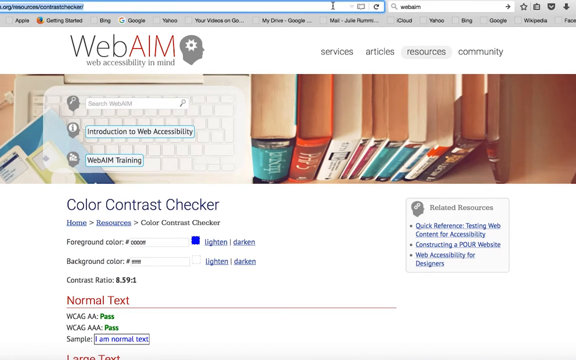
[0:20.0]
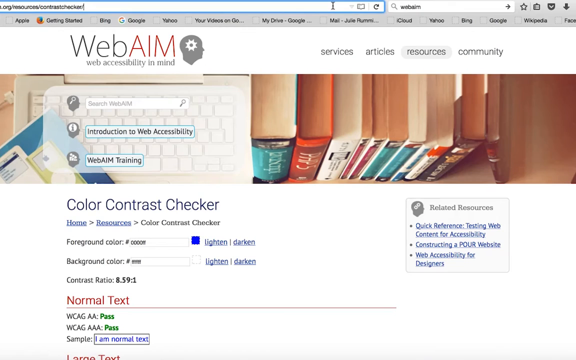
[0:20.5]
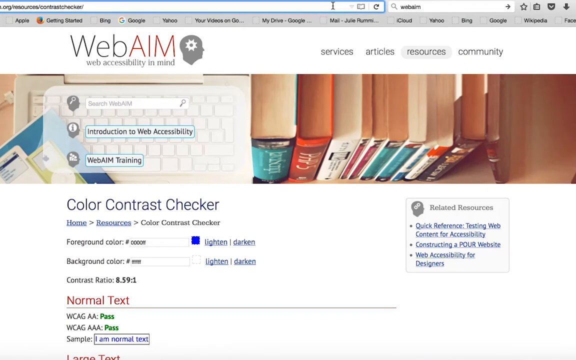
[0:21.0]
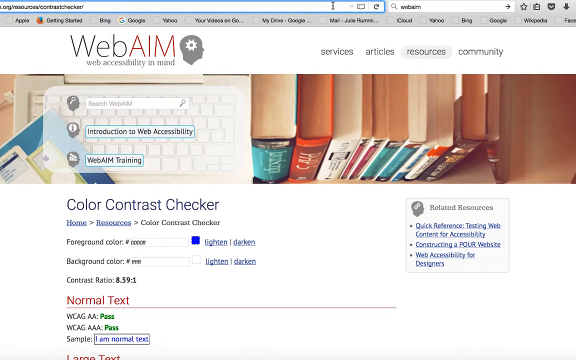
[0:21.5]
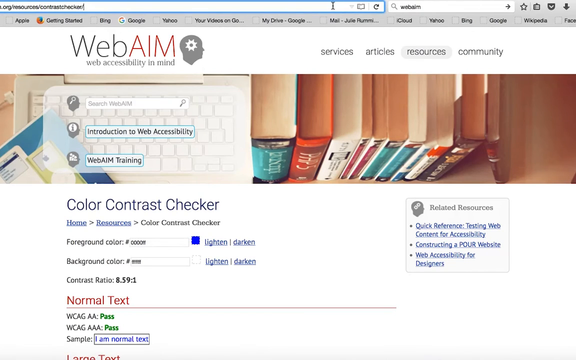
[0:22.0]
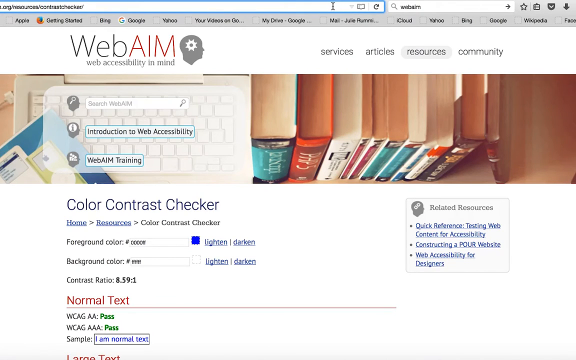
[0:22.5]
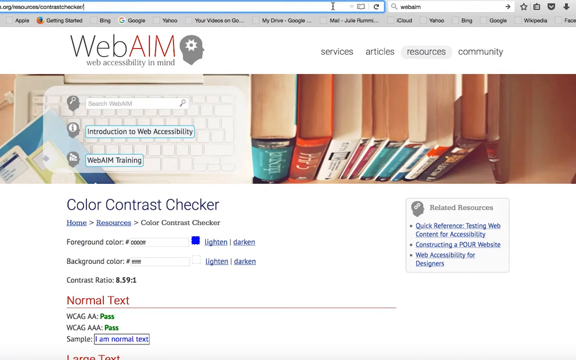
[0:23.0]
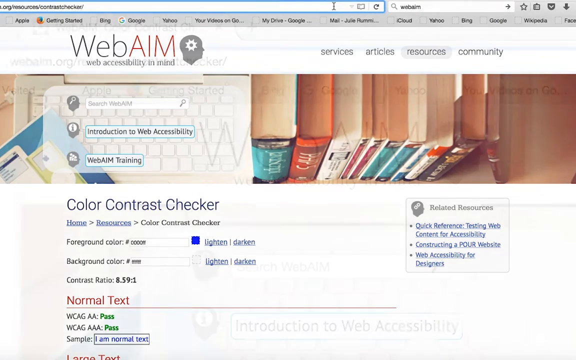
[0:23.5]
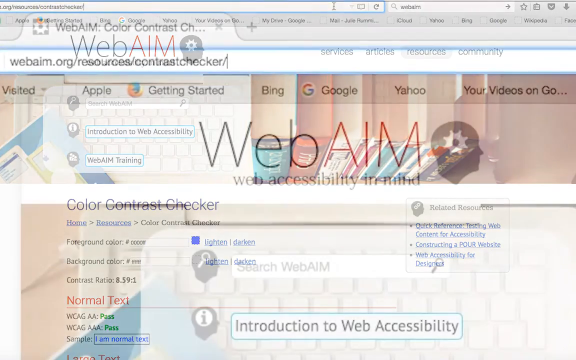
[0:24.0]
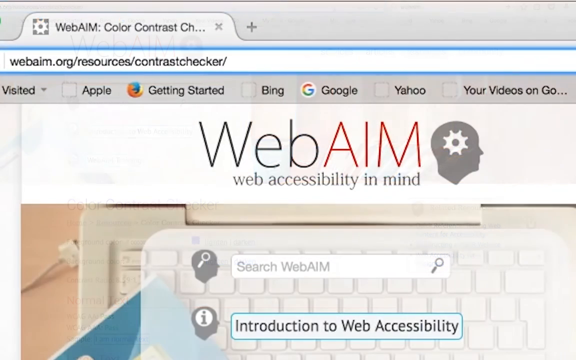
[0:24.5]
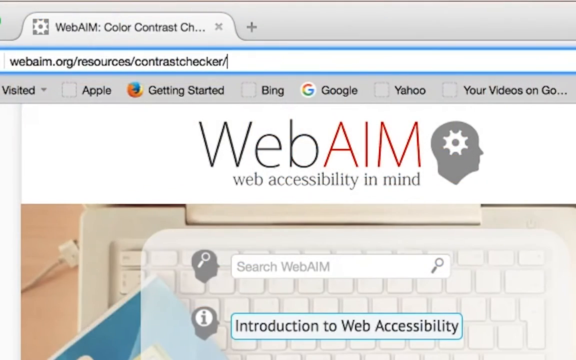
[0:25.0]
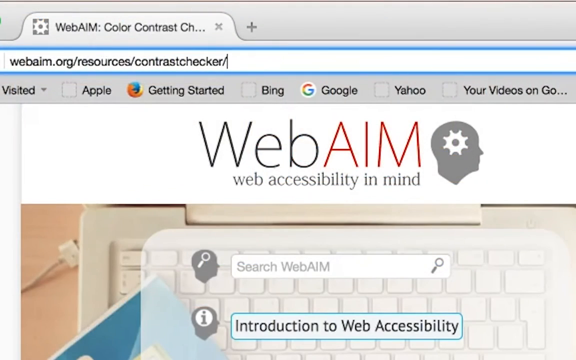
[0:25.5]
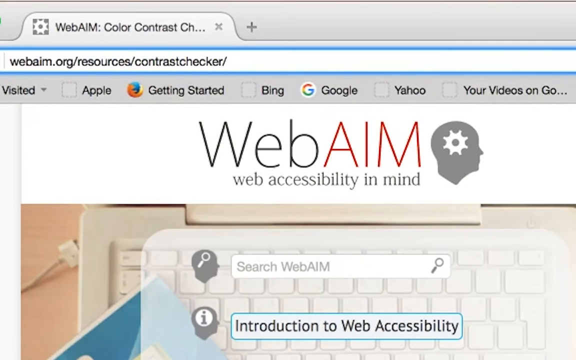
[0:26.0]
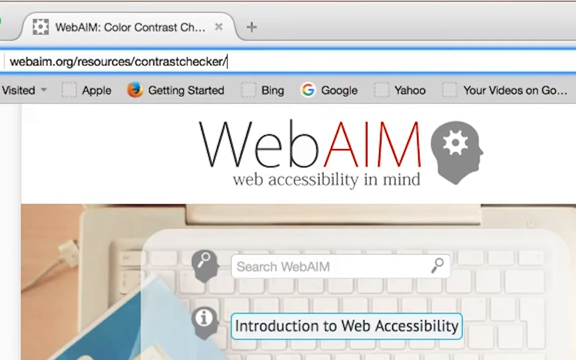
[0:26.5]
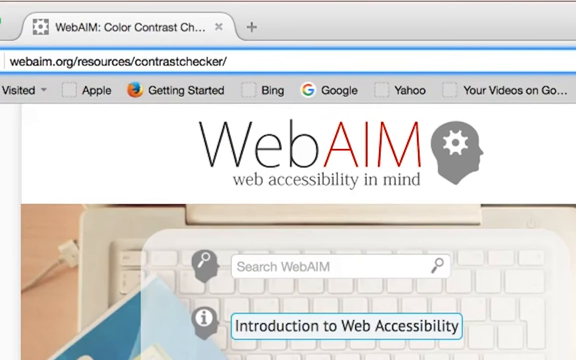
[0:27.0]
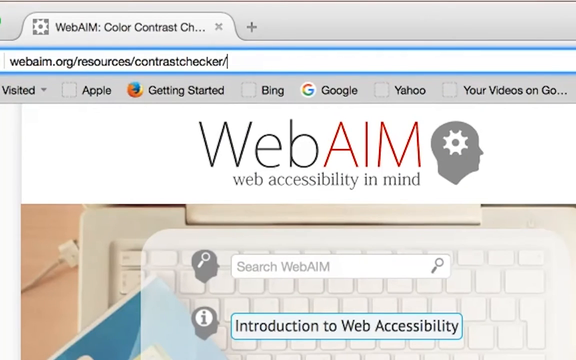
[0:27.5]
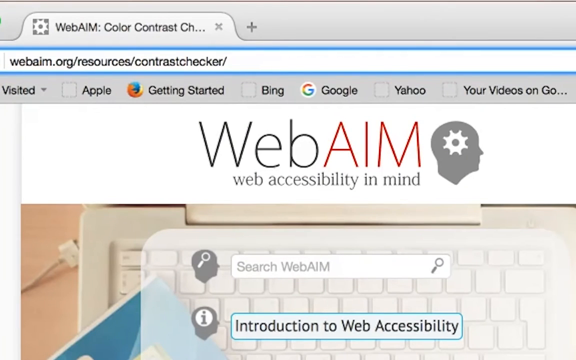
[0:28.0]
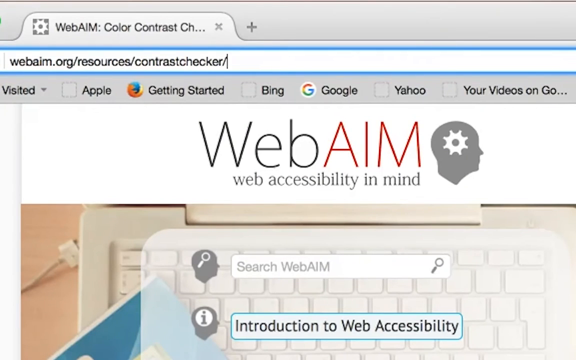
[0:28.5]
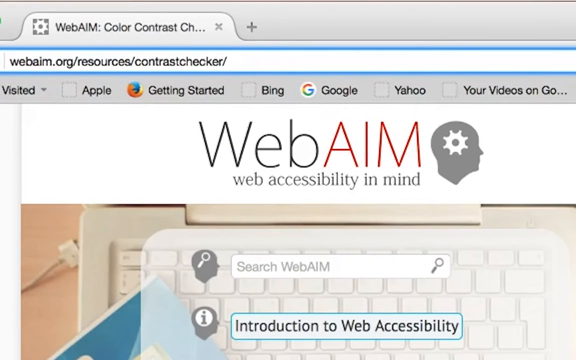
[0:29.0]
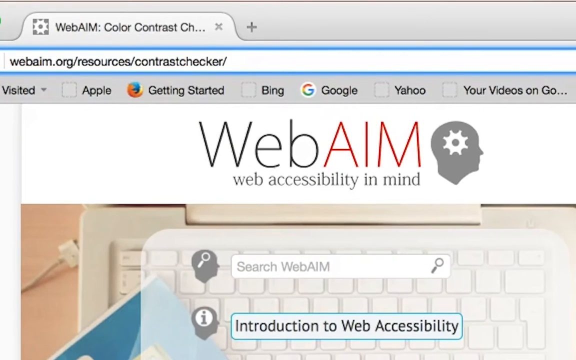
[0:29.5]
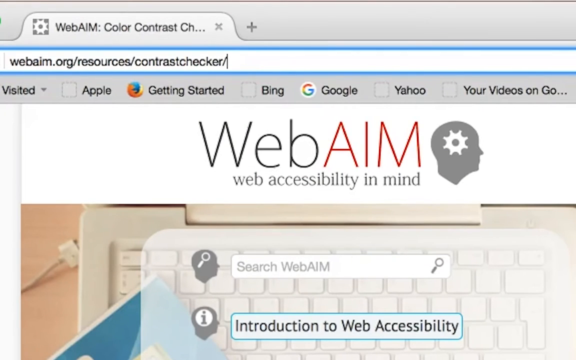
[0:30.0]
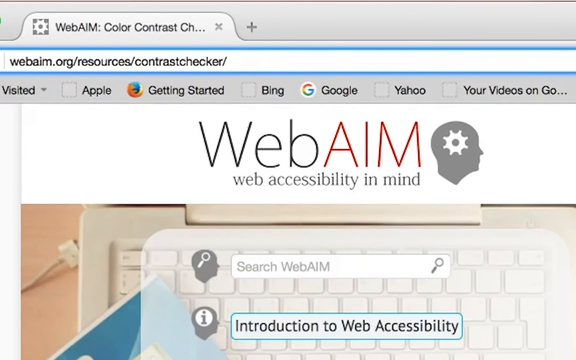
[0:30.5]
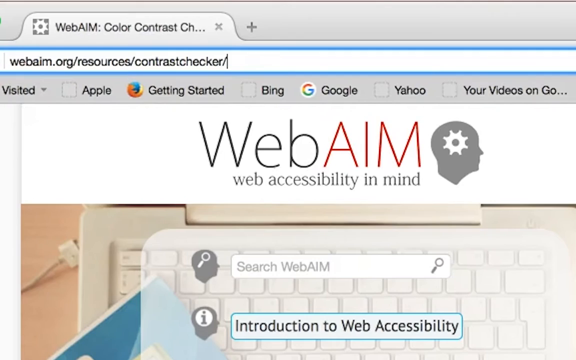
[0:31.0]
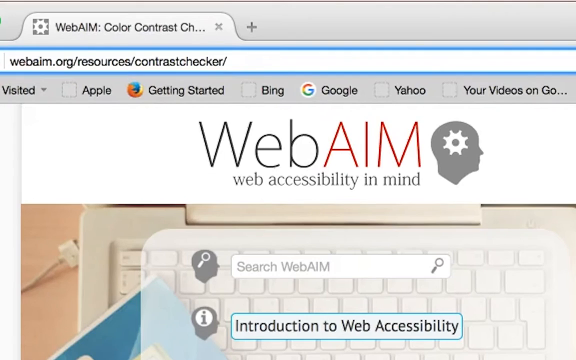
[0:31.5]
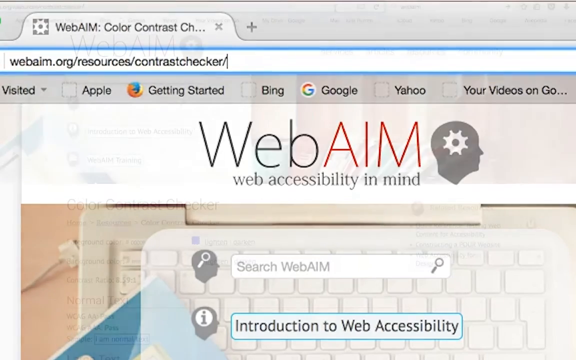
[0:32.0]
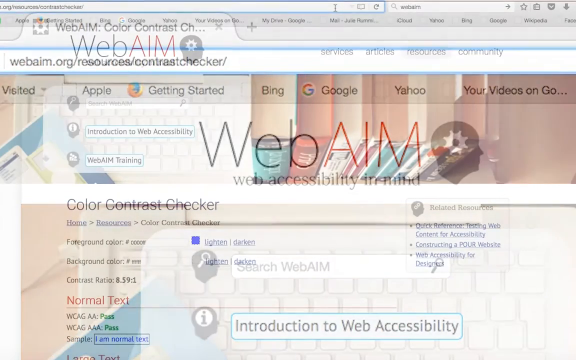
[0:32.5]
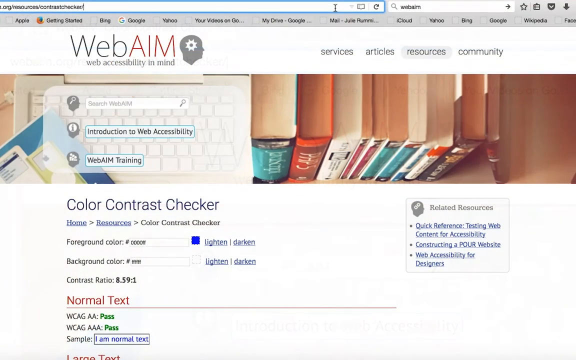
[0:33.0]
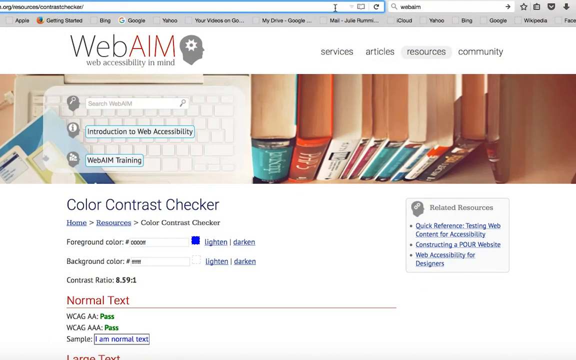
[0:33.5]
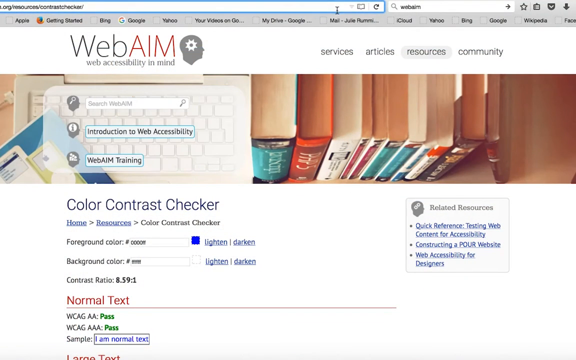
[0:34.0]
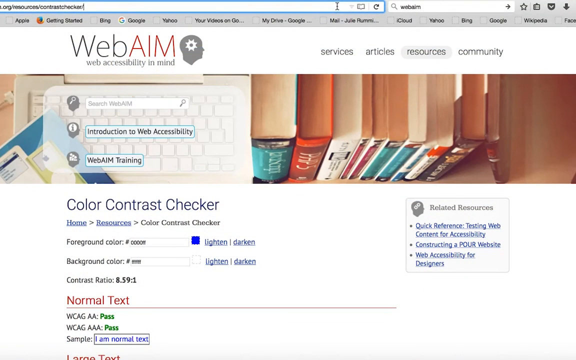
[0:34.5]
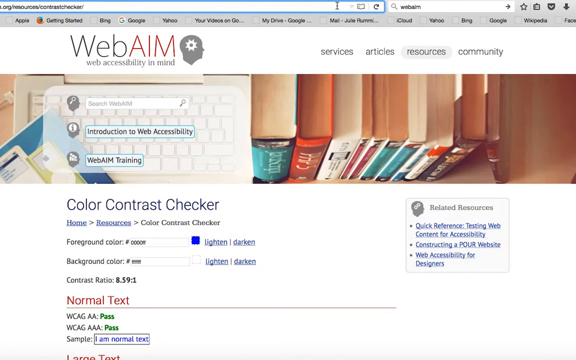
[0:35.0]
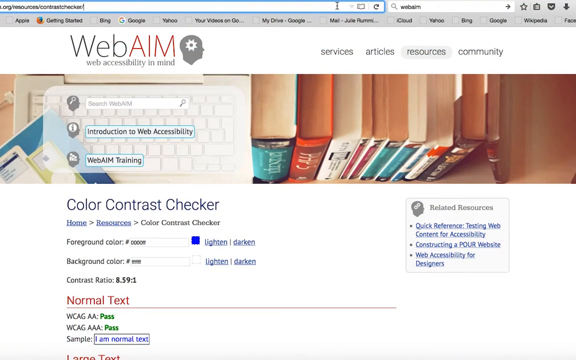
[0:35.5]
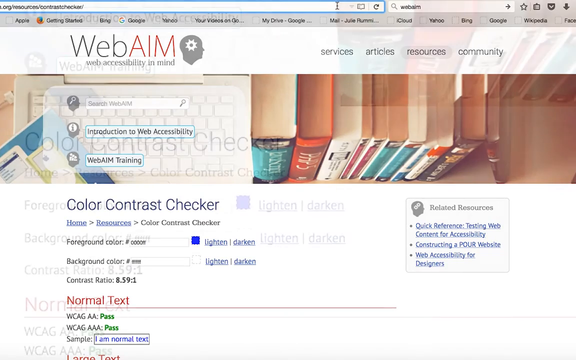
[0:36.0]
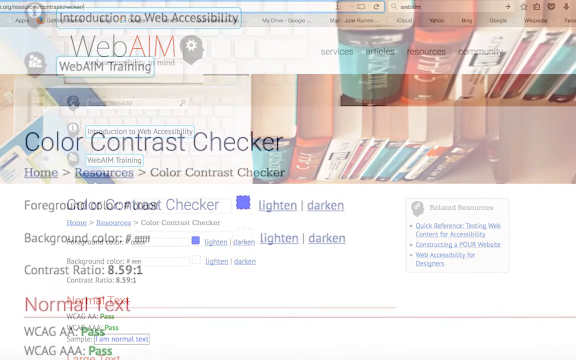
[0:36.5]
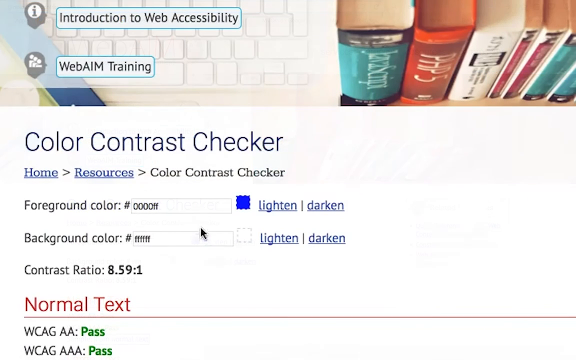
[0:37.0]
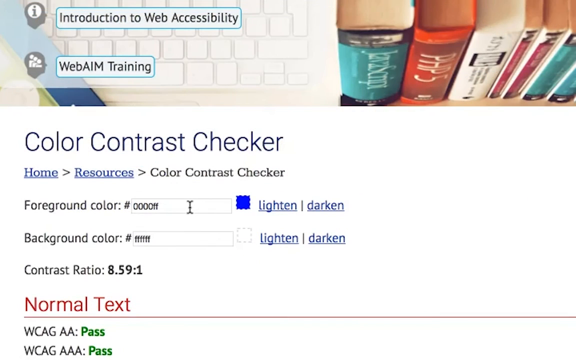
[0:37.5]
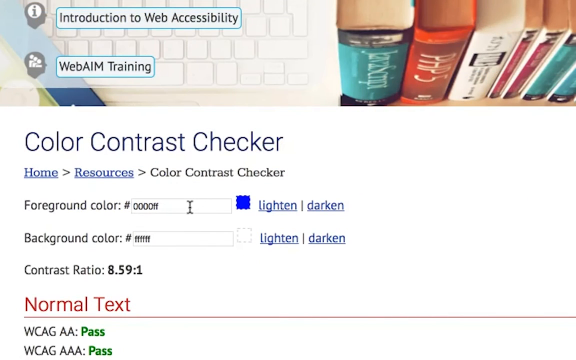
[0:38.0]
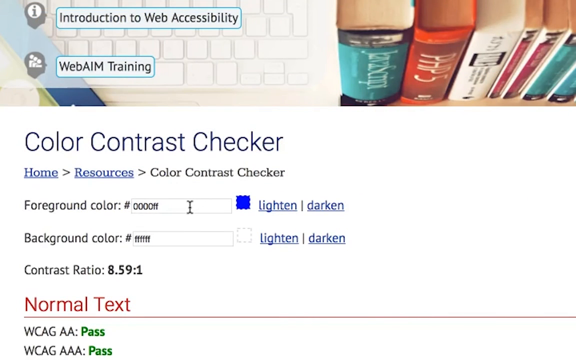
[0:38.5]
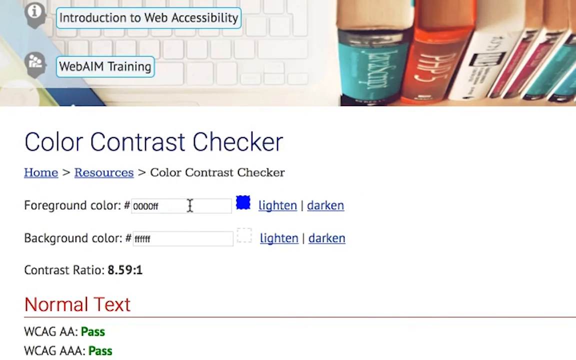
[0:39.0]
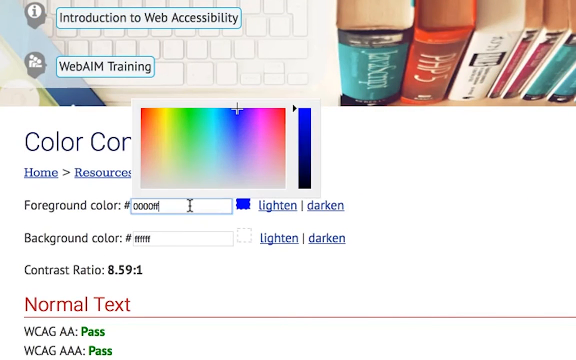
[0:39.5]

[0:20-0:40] A web page for WebAIM, "Web Accessibility in Mind," is shown, with a logo of a human head in profile with a cog wheel inside it. There are tabs for services, articles, resources, and community, and the resources tab is open. The banner is a photograph of several books viewed from the top, with a laptop keyboard to their left. The page transitions to a close-up of the name WebAIM and its logo. The cursor then appears on the bottom half of the page, in a section for a color contrast checker with several boxes. The cursor clicks into one of them, and a color bar with a series of vibrant colors to choose from appears, like a drop-down box, with a code for the color. At the very bottom of the page is red text reading "normal text."